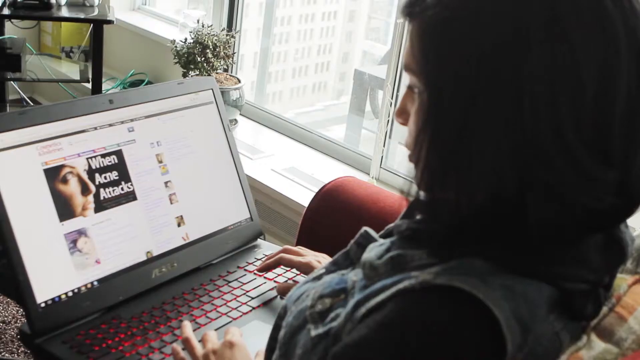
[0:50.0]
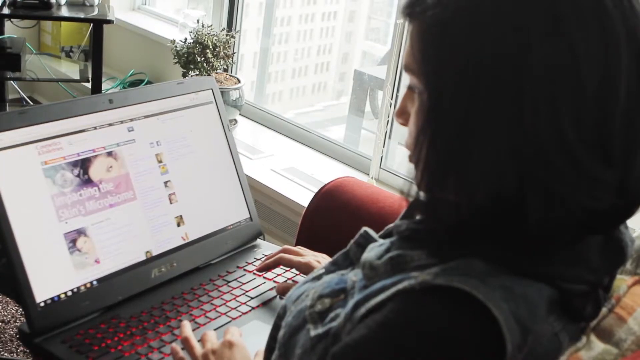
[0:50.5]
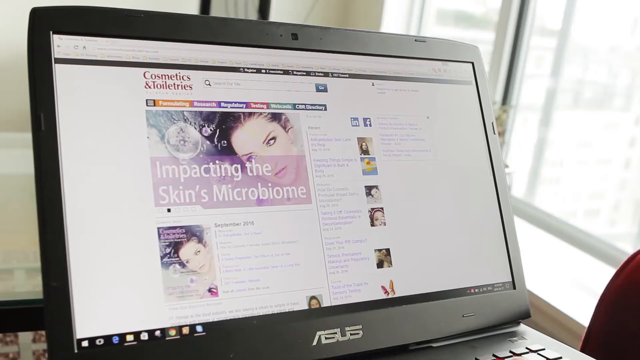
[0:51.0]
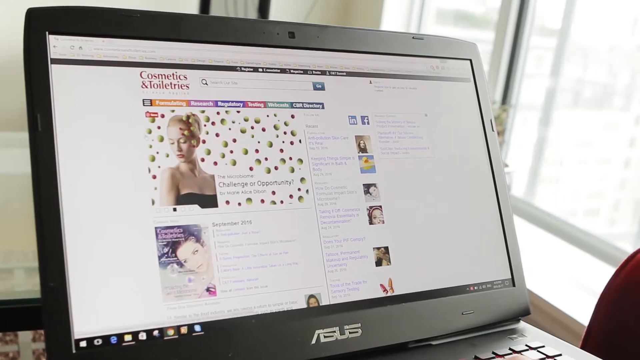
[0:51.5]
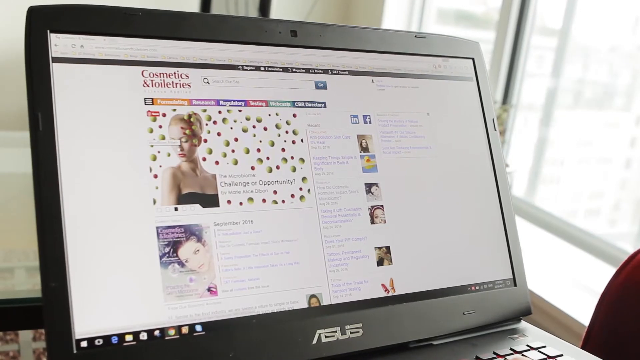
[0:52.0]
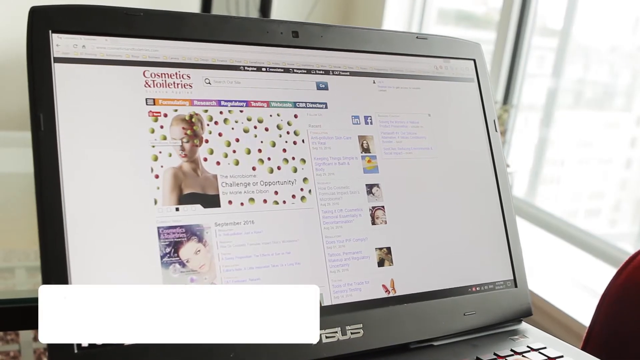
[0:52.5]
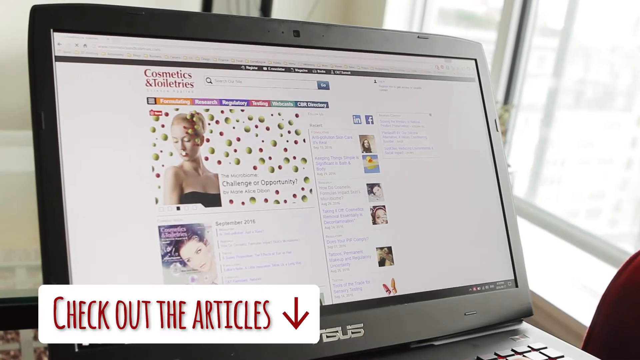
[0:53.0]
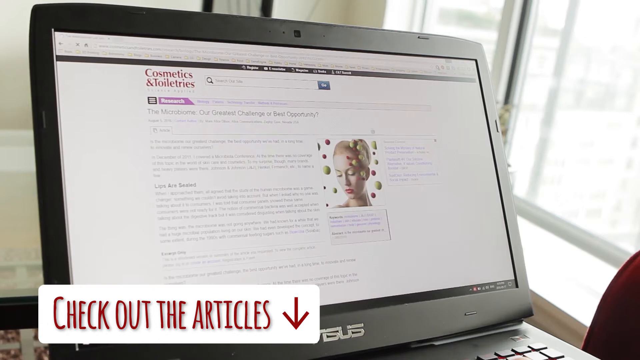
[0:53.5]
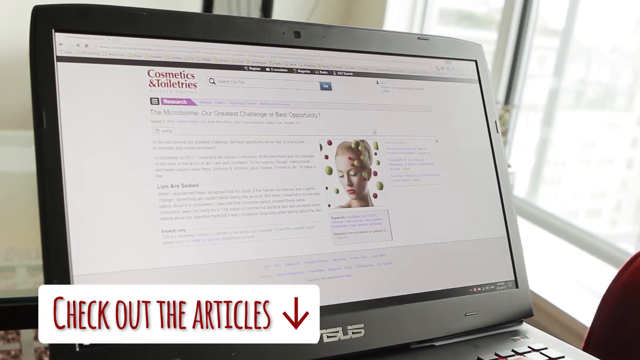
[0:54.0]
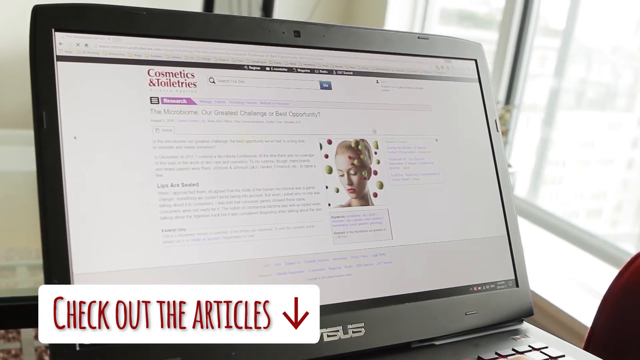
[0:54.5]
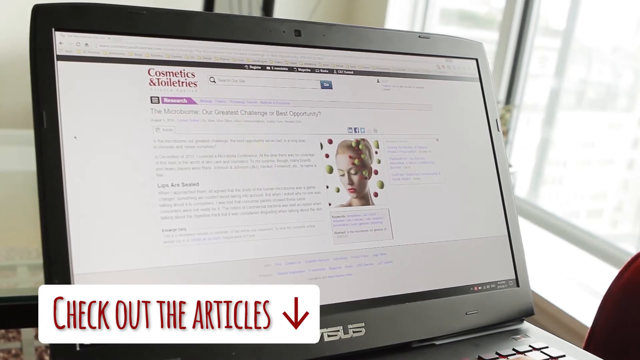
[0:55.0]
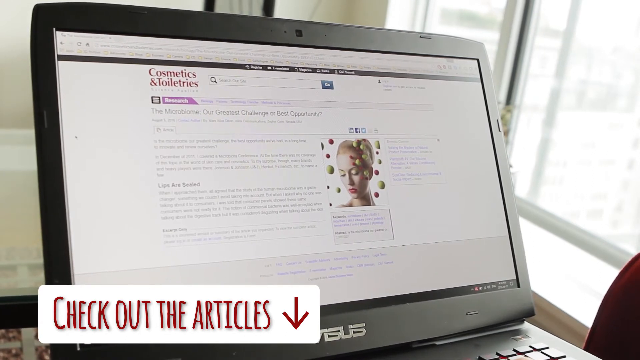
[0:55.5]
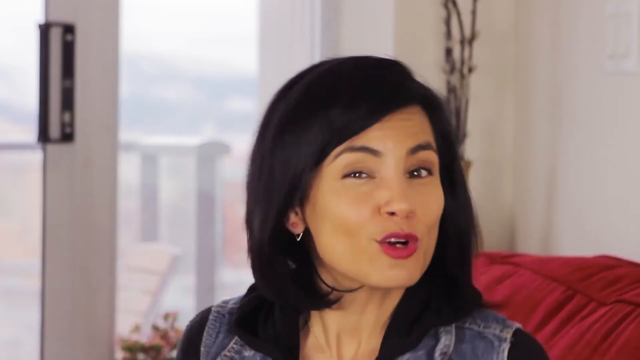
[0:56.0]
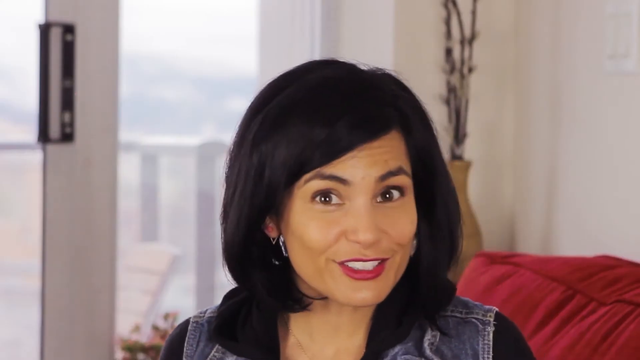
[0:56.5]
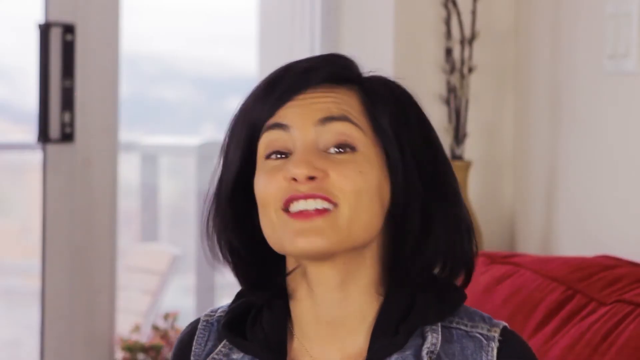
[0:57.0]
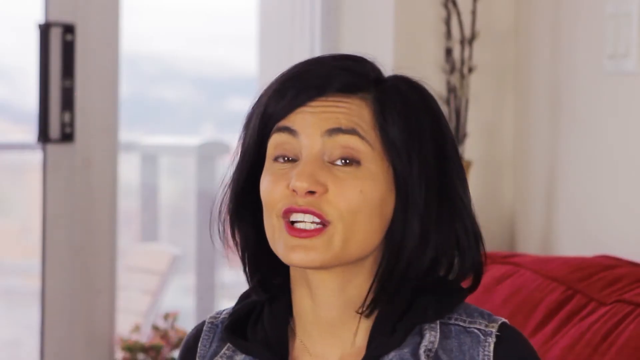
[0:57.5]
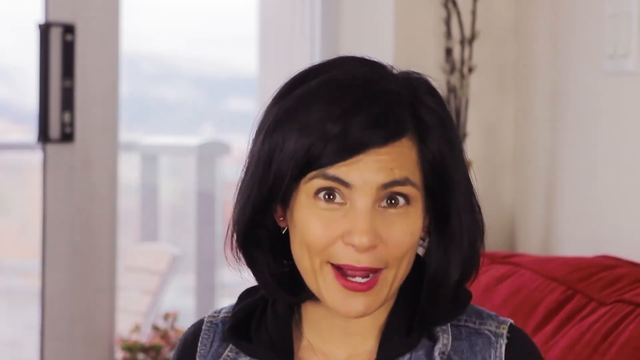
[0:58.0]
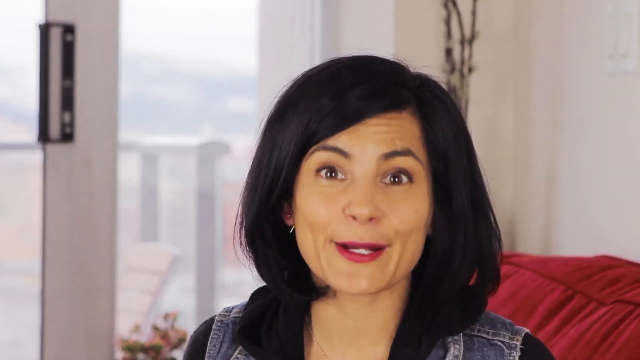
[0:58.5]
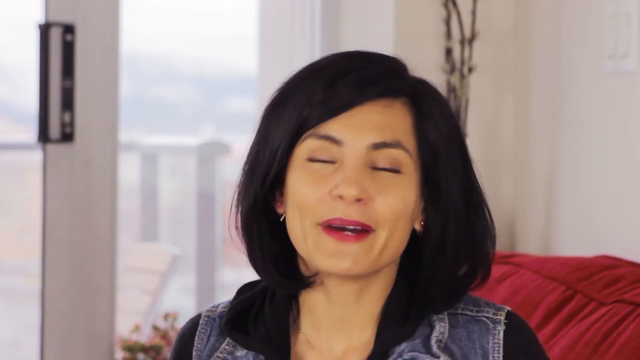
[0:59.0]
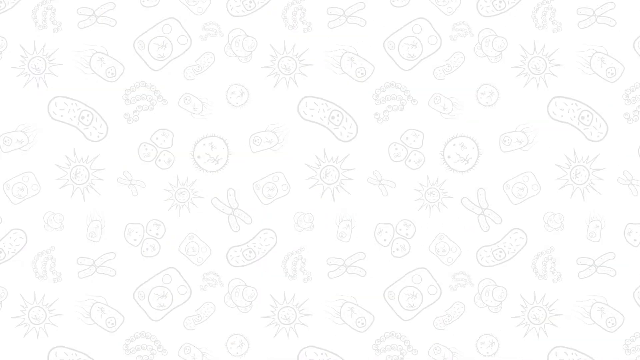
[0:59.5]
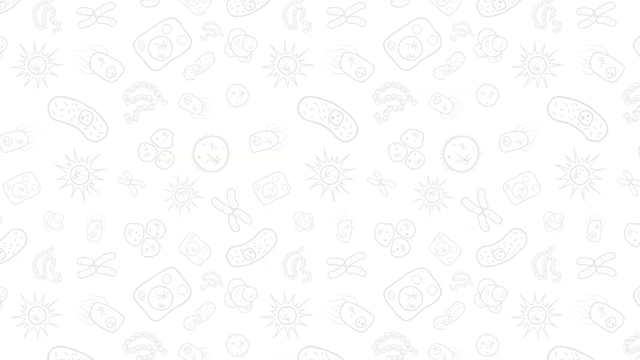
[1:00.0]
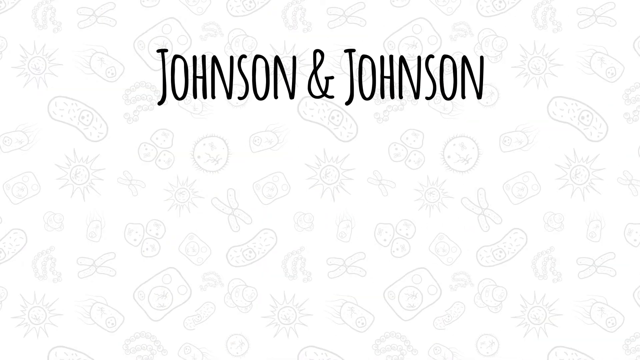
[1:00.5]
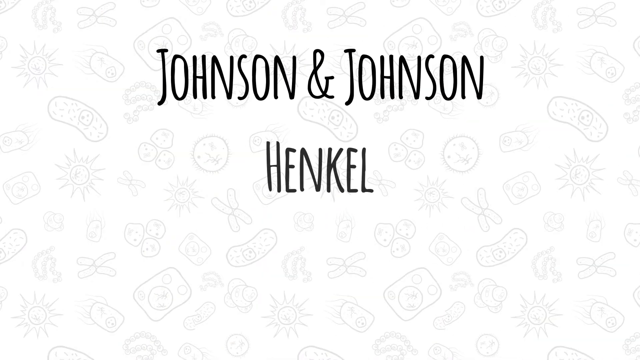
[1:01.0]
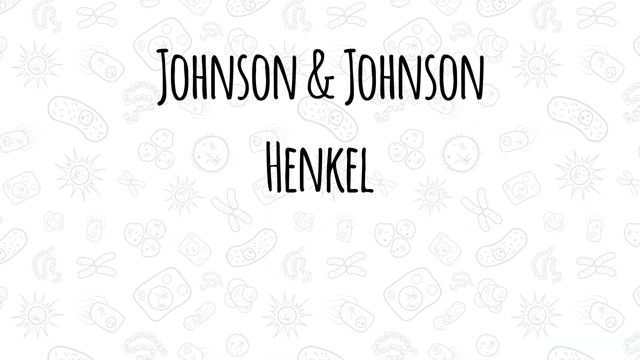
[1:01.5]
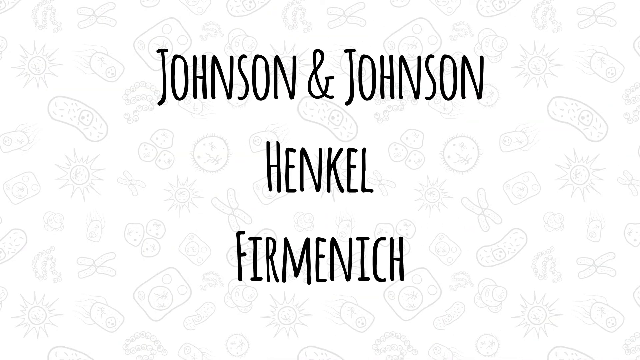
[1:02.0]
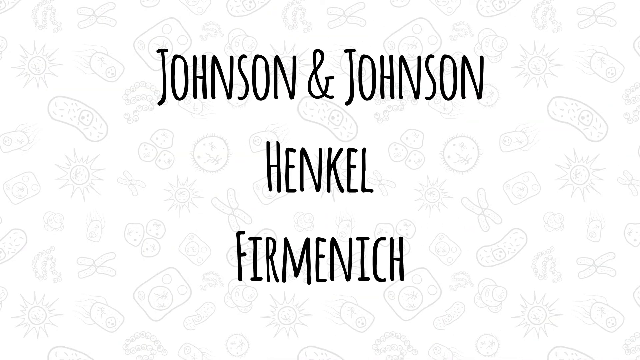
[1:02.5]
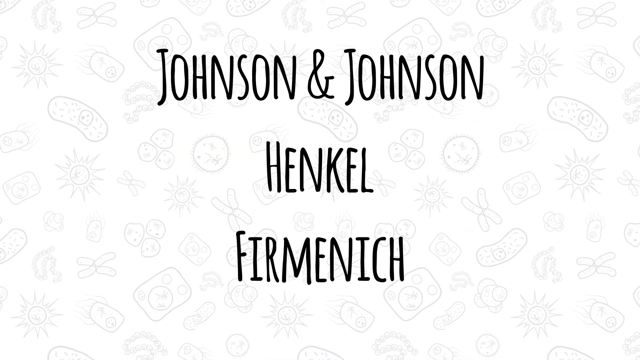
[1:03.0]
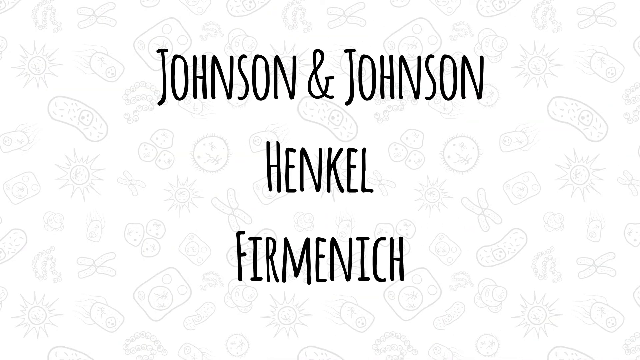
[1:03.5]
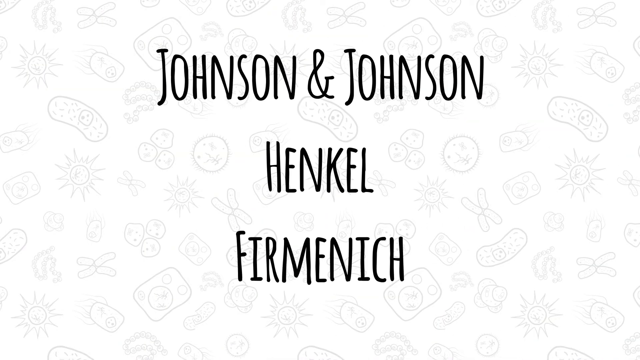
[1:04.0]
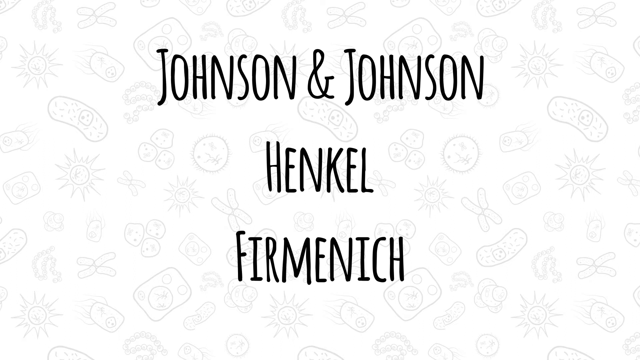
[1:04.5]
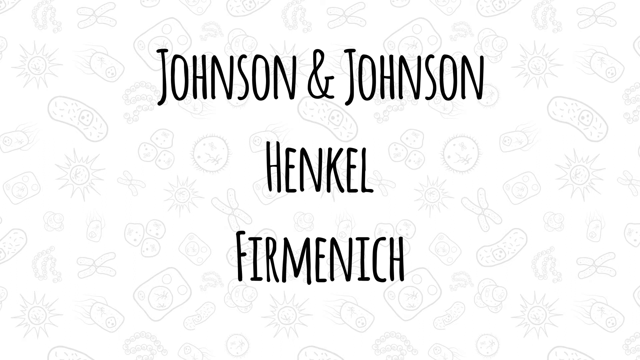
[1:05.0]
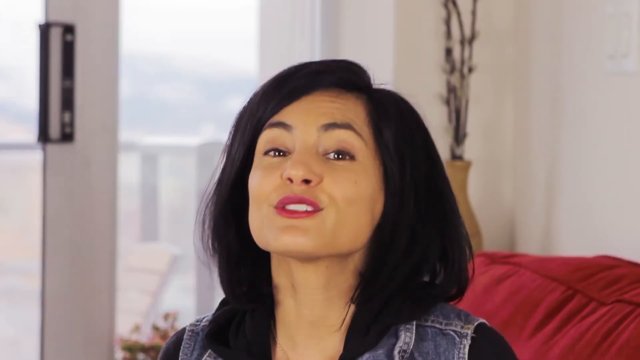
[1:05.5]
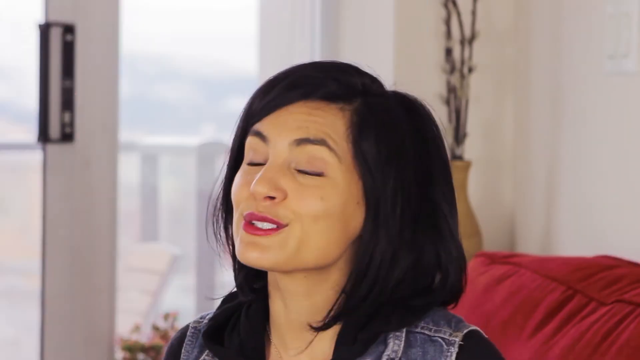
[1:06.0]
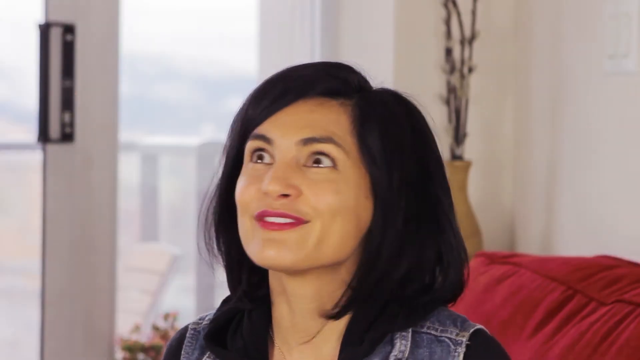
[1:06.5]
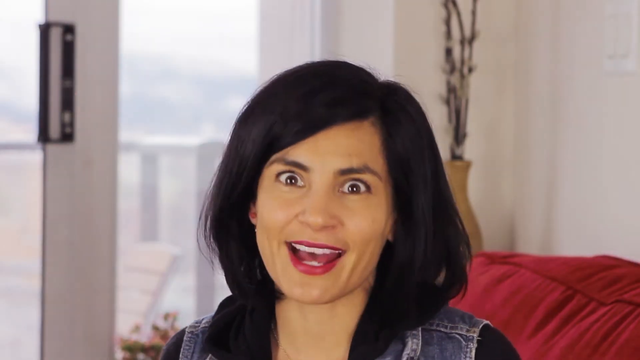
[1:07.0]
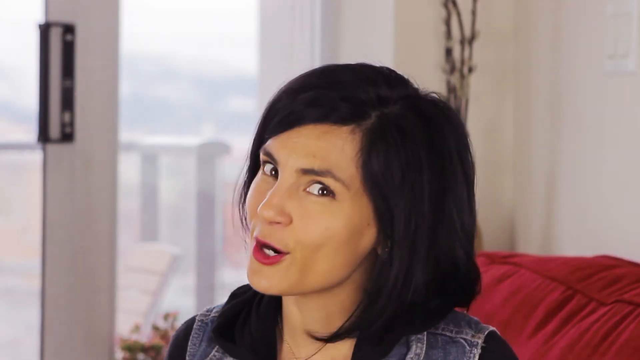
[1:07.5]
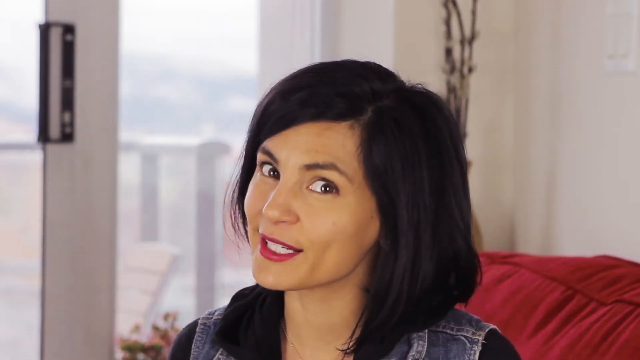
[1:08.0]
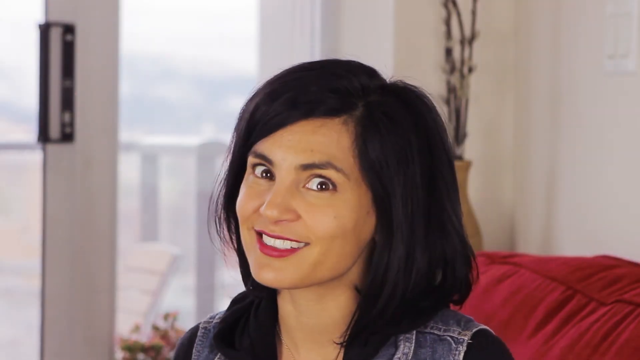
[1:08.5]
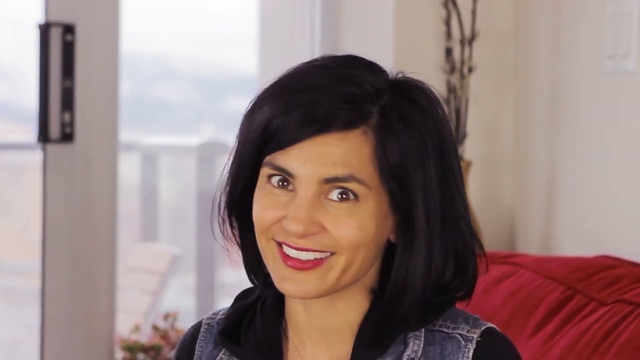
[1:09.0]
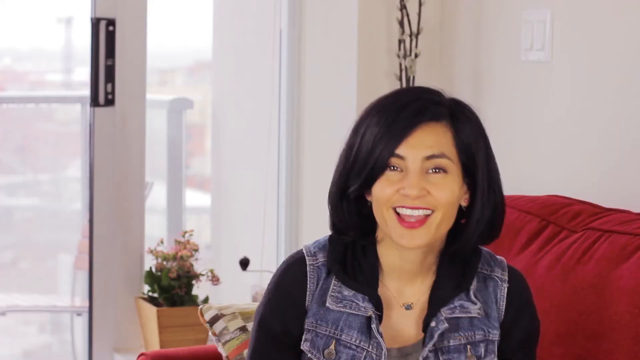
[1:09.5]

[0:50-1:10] The woman sits on the couch wearing a jacket and a black long-sleeved shirt. Through the window on the right side of the shot, a multi-story building block is visible outside, showing that she is inside an apartment building. She holds a black laptop with a pink and black keyboard, and on its screen she looks at what appear to be newspaper articles about when acne attacks, scrolling through multiple articles in the cosmetics and toiletries section of the website. The video cuts to a close-up of the woman framed from her shoulders up; she slightly tilts her head as she speaks and smiles. Another shot shows a background of bacteria and fungus, with "Johnson and Johnson" appearing in black text. The video cuts back to the woman, with the background extending to the left of the screen; she tilts her head slightly to the right, opens her eyes while smiling, and moves.